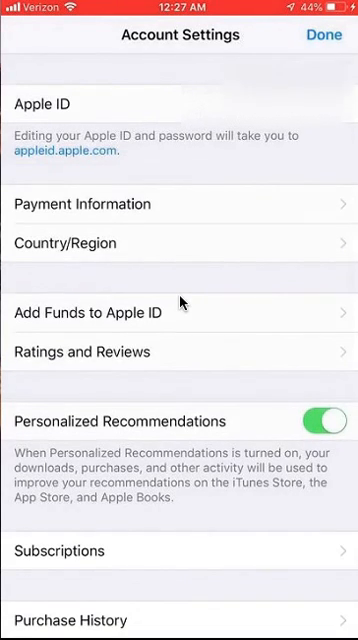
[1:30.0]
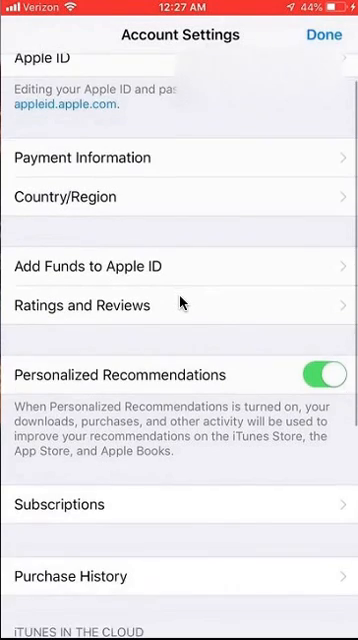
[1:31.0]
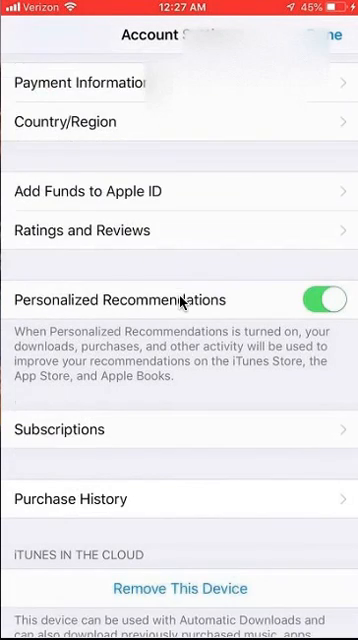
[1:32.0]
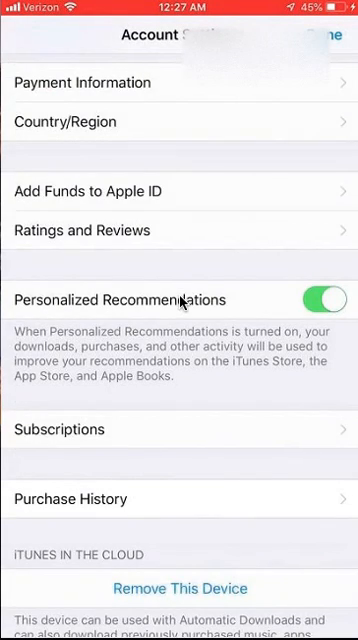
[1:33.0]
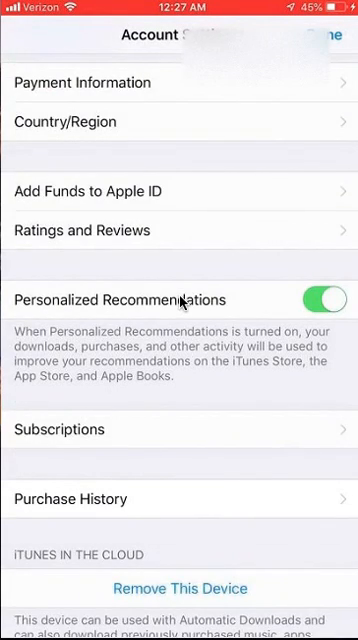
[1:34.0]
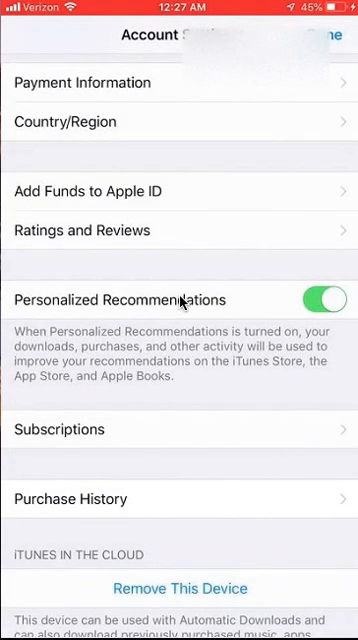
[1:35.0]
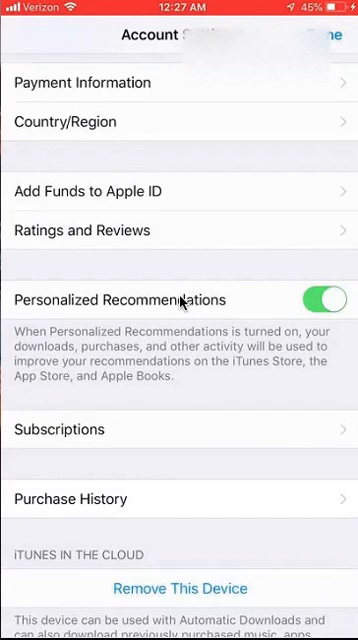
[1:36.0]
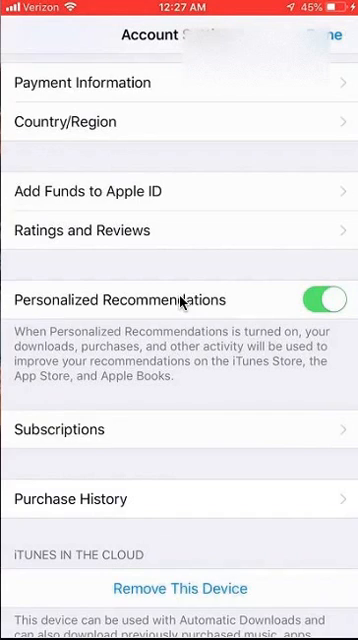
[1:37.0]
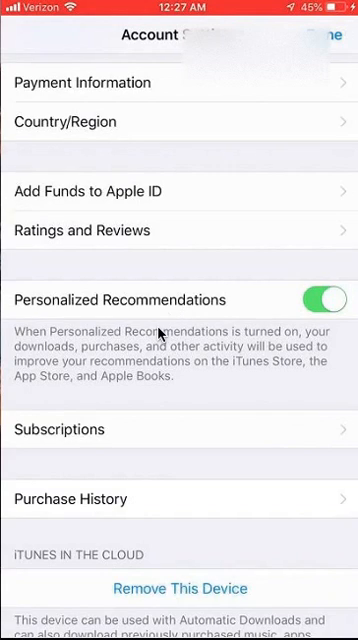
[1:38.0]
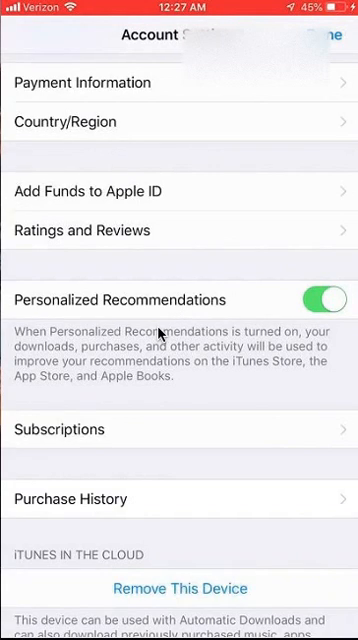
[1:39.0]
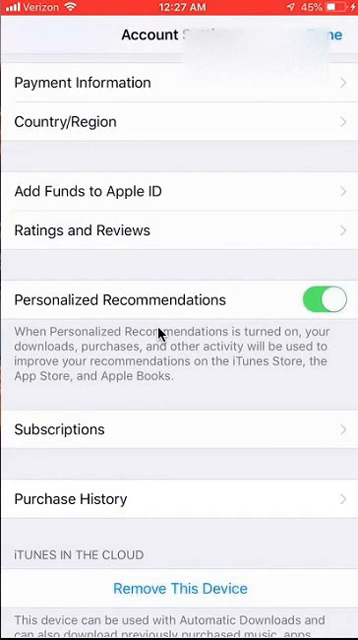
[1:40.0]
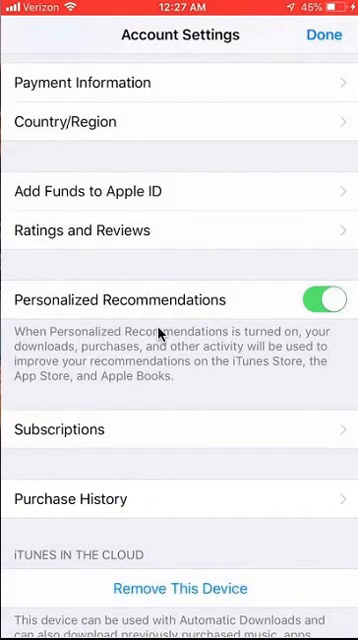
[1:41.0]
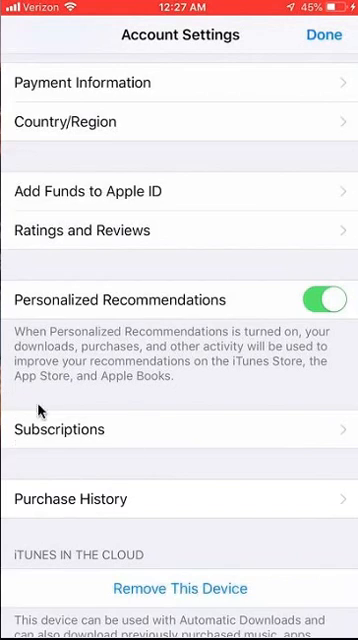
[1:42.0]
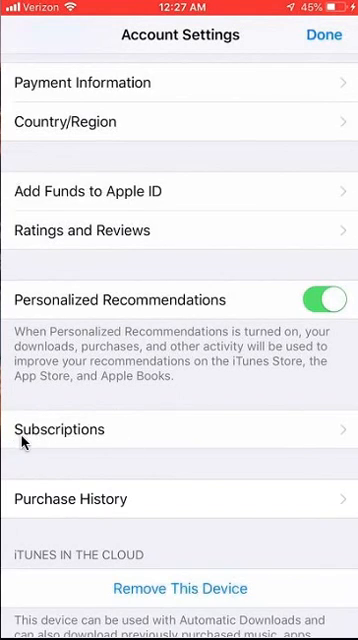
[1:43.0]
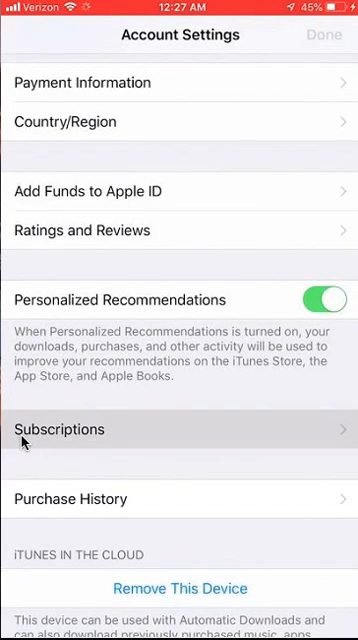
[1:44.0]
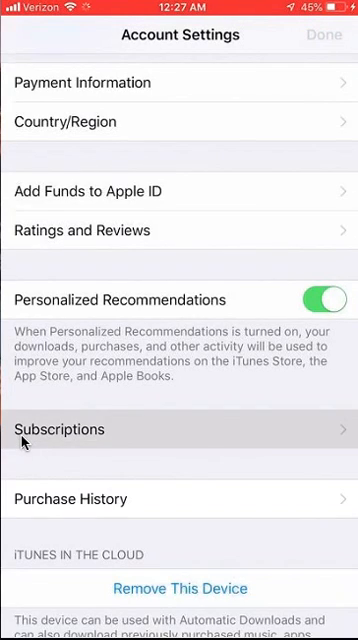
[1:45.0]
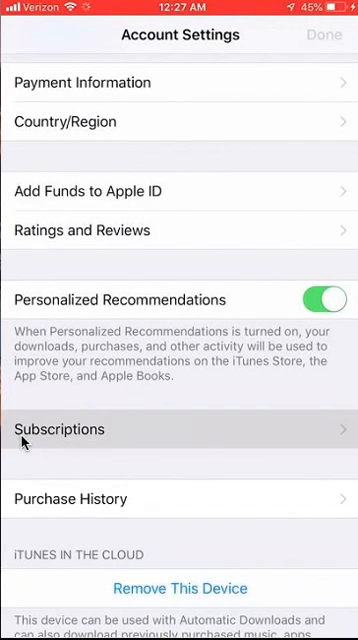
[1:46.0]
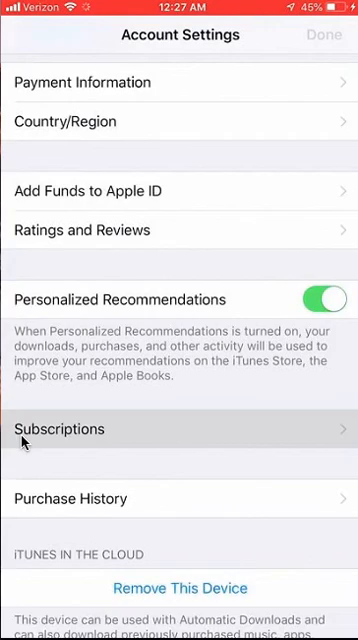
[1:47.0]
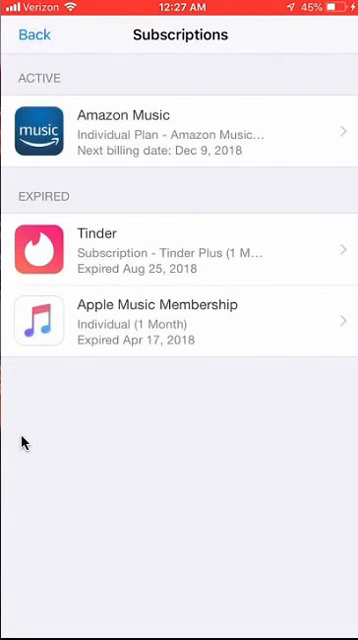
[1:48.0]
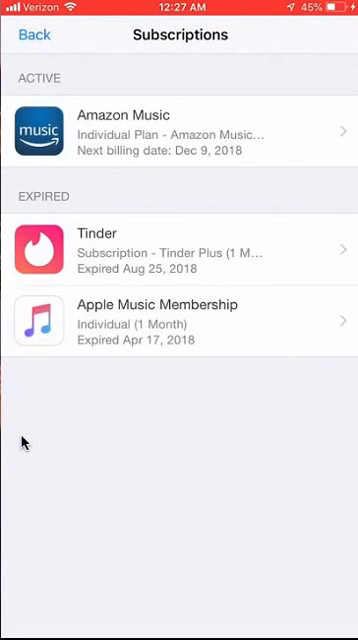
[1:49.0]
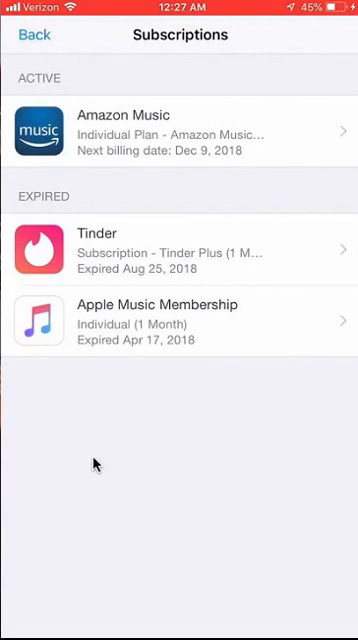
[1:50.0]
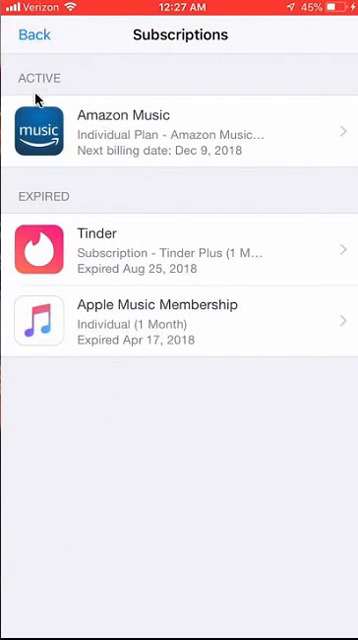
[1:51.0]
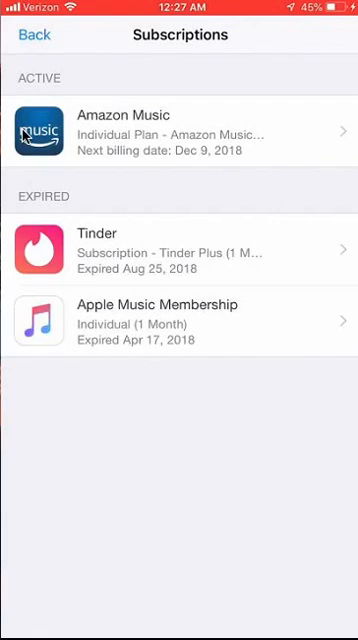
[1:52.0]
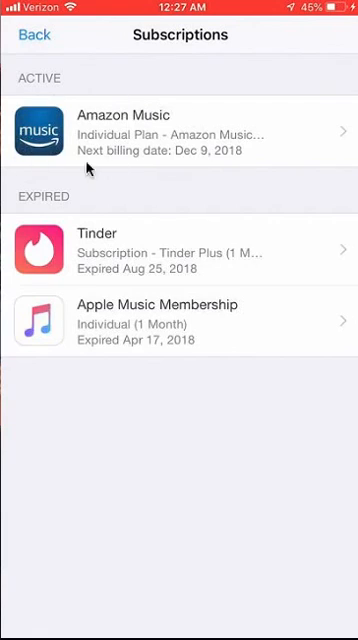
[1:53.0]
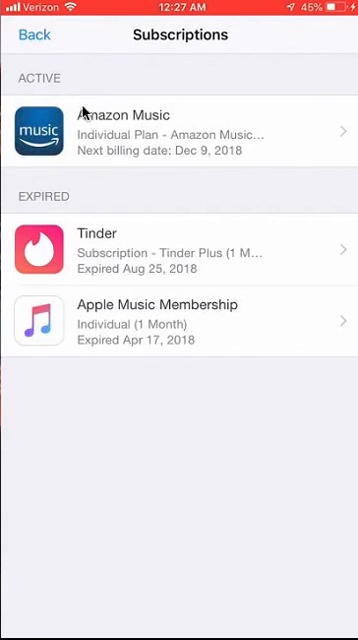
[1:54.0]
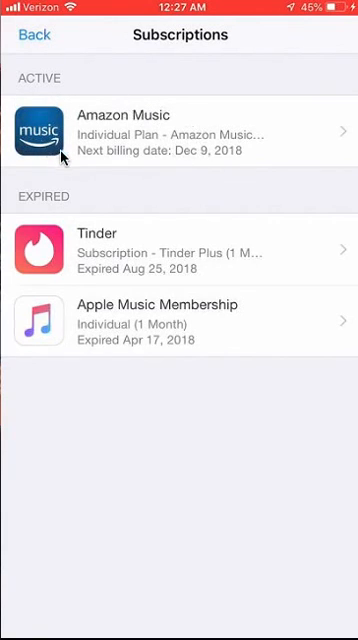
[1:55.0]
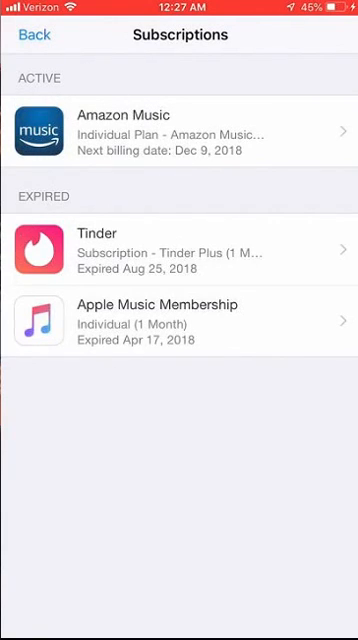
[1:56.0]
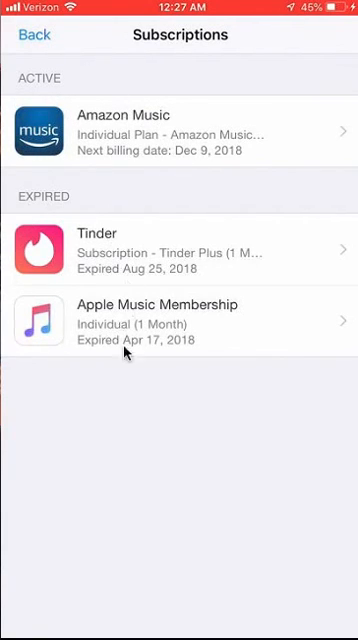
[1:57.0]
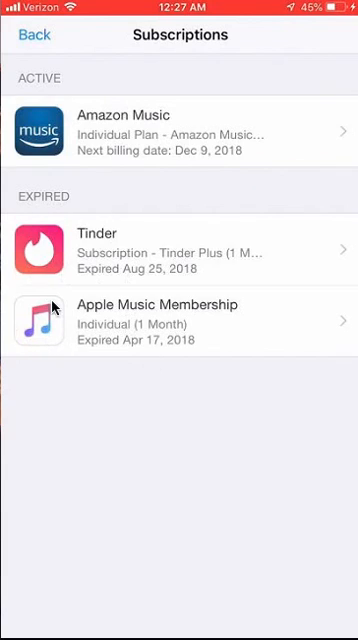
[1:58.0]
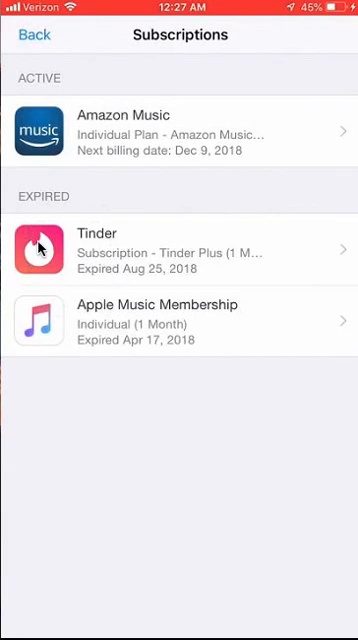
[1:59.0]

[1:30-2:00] The person remains on the account settings while screen recording the phone. Below Apple ID it says "Editing your Apple ID and password will take you to appleid.com", followed by the clickable items payment information and country region. Below those are more clickable items: add funds to Apple ID, and ratings and reviews. Personalized recommendations is toggled on, and a smaller message below says "when personalized recommendations is turned on your downloads, purchases, and other activities will be used to improve your recommendations on the iTunes Store, the App Store, and Apple Books." Below that are a subscriptions button and purchase history. The person keeps scrolling down to iTunes in the cloud, which shows remove this device, with a smaller message below about this device being usable with automatic downloads. They then click into subscriptions above.